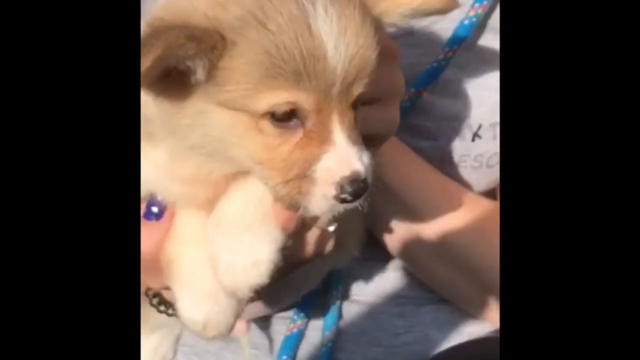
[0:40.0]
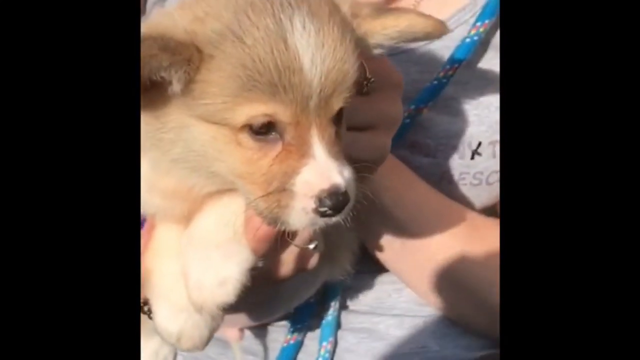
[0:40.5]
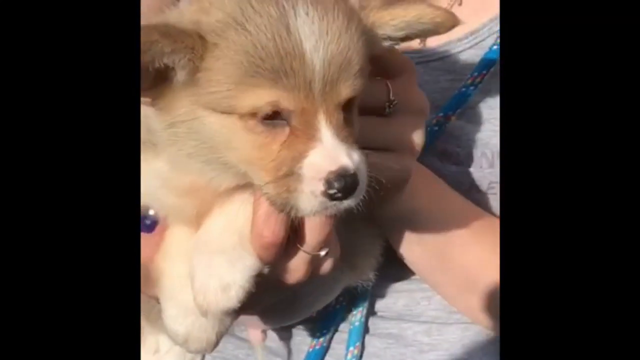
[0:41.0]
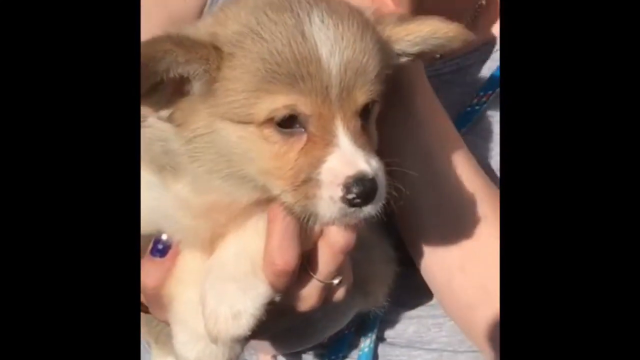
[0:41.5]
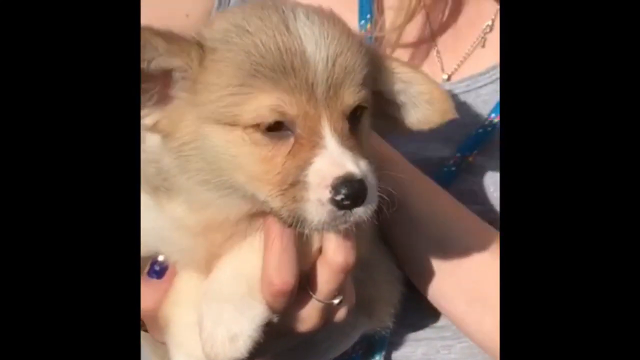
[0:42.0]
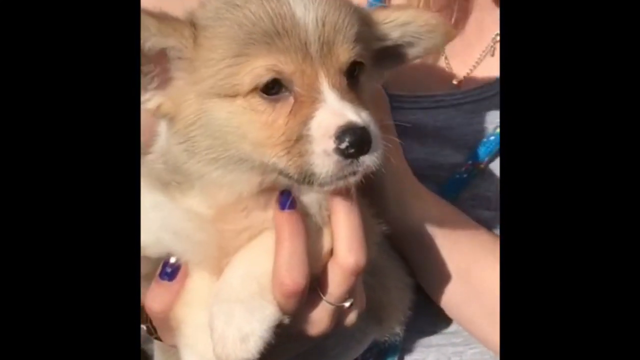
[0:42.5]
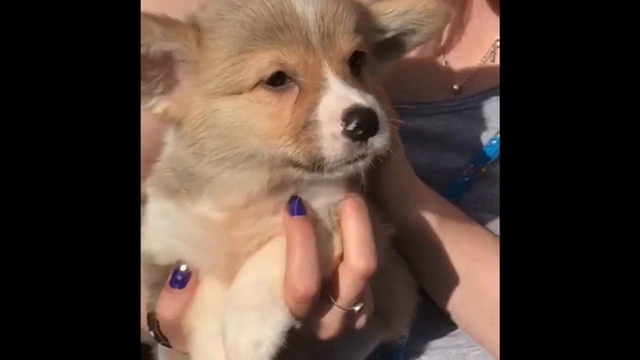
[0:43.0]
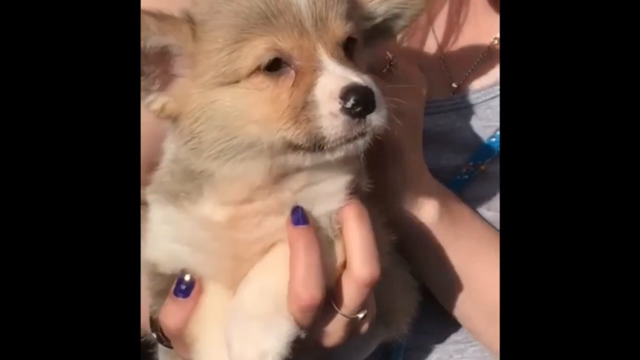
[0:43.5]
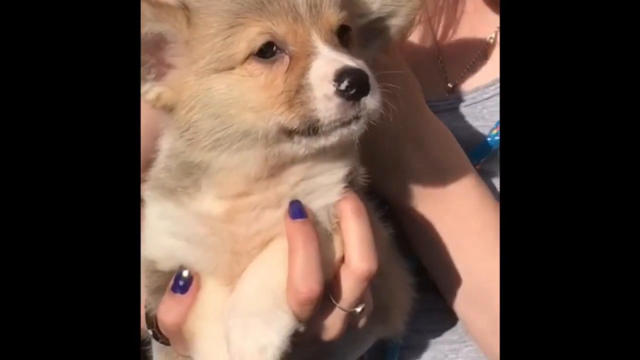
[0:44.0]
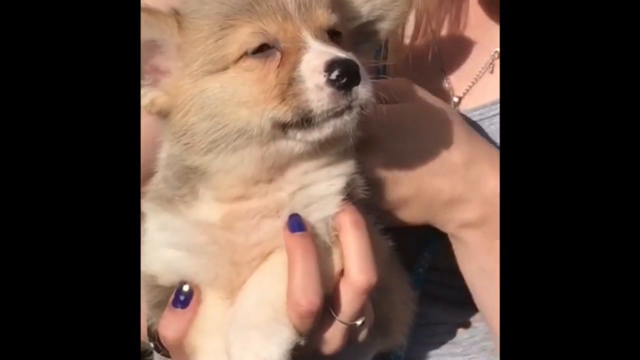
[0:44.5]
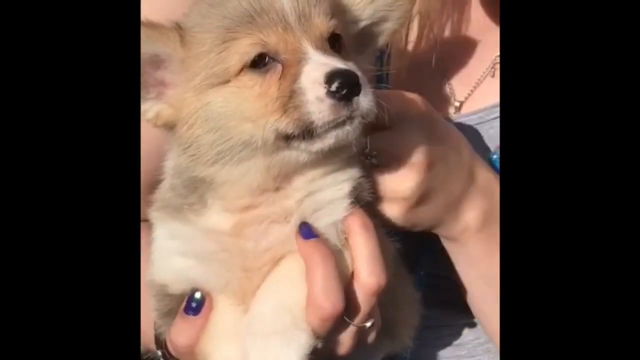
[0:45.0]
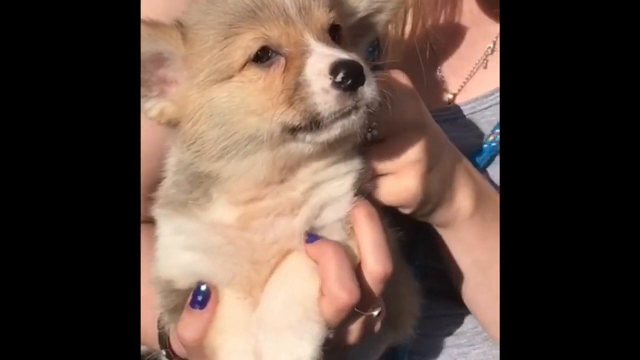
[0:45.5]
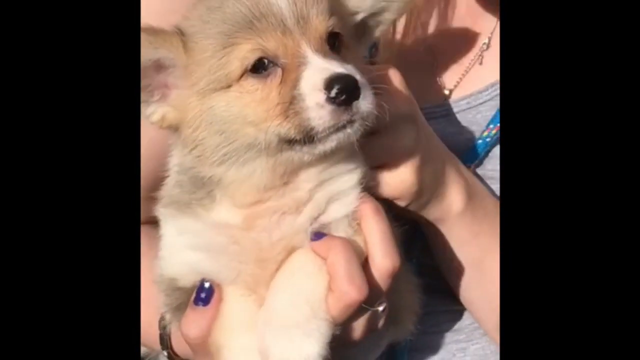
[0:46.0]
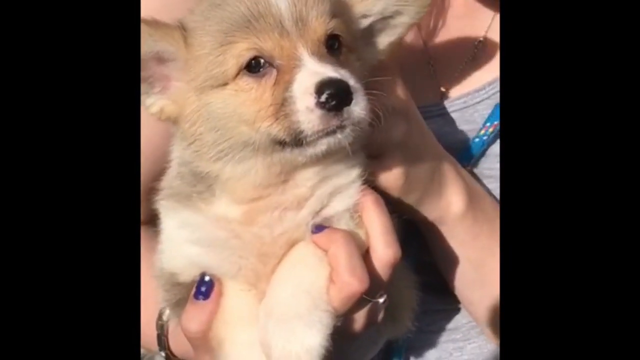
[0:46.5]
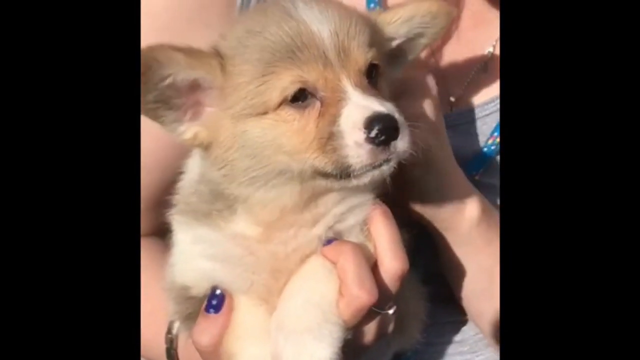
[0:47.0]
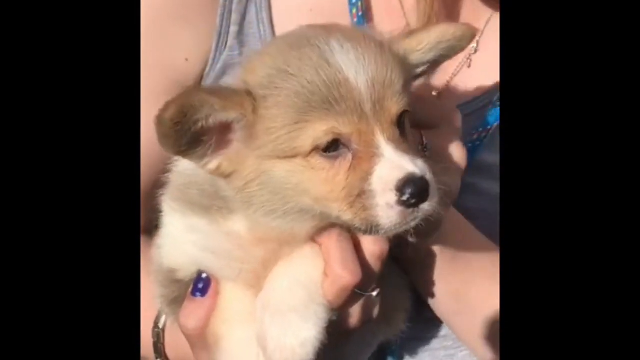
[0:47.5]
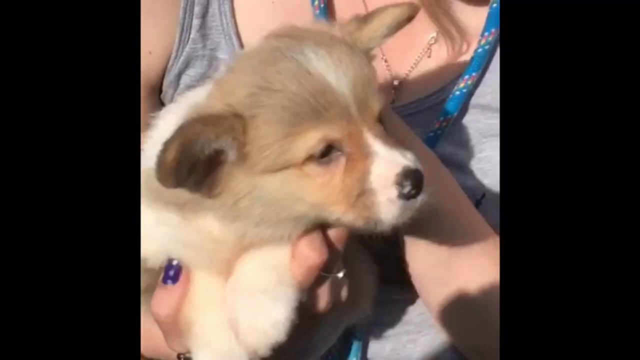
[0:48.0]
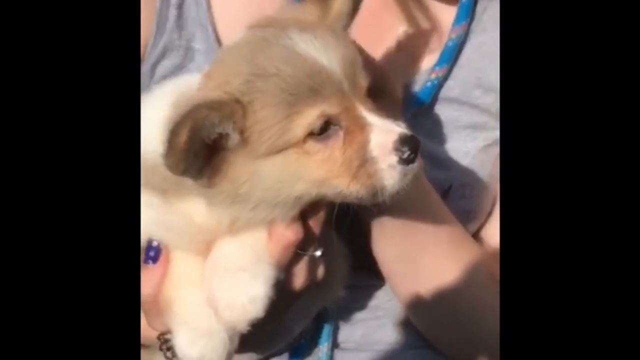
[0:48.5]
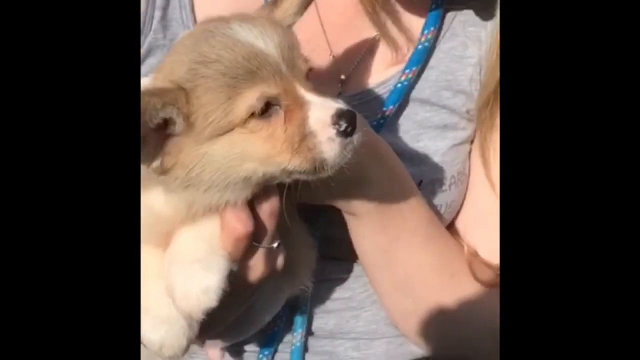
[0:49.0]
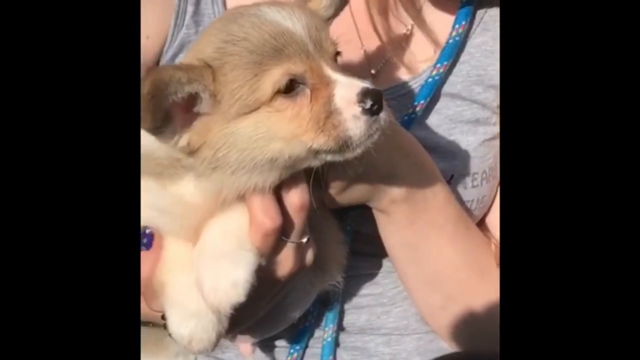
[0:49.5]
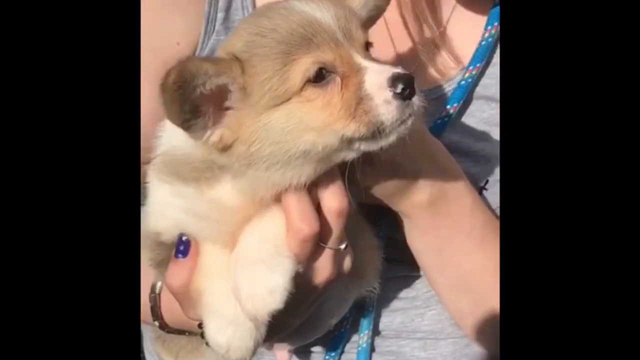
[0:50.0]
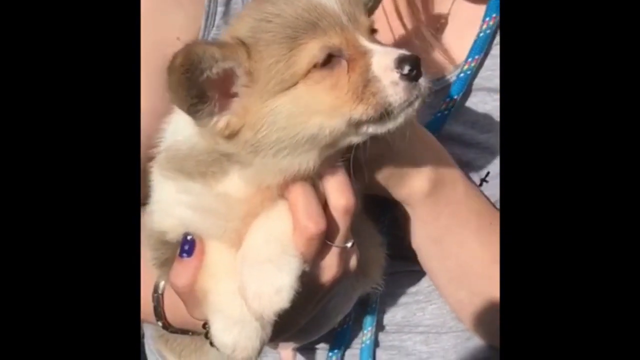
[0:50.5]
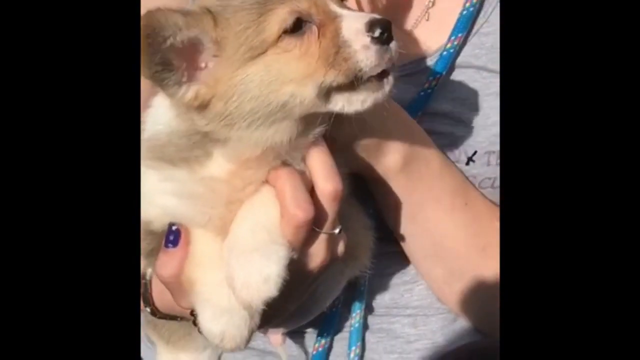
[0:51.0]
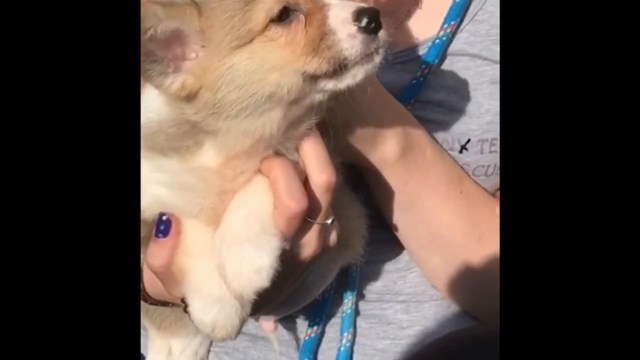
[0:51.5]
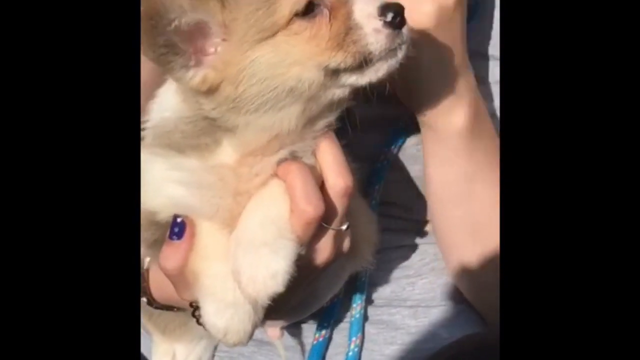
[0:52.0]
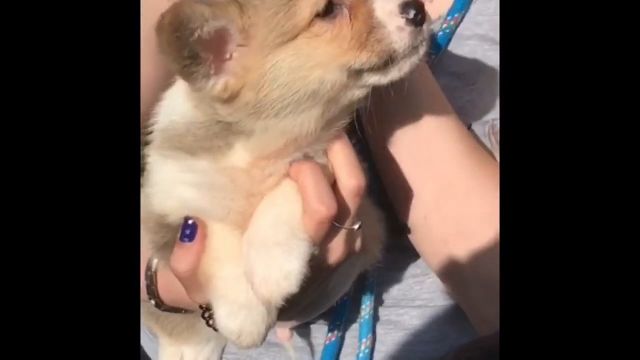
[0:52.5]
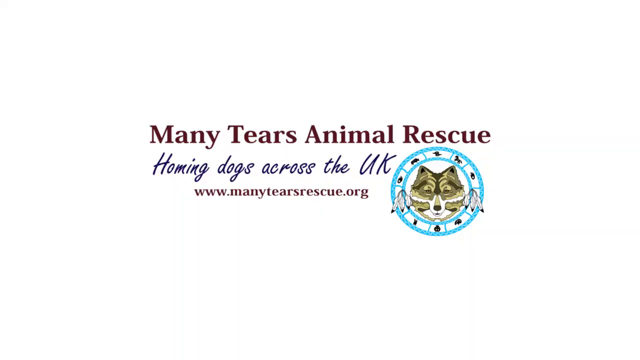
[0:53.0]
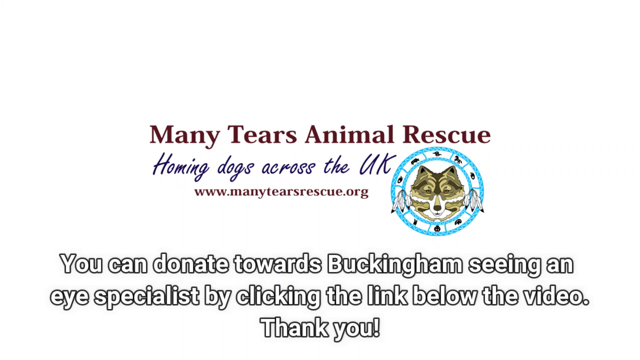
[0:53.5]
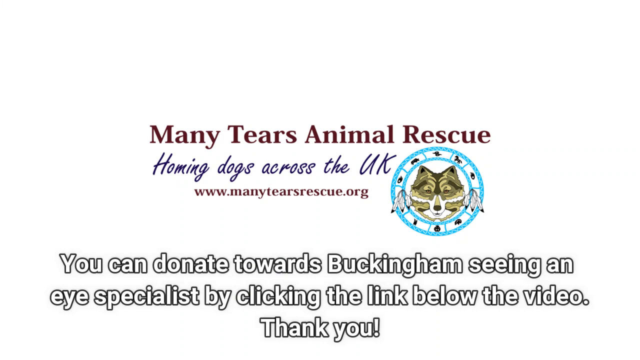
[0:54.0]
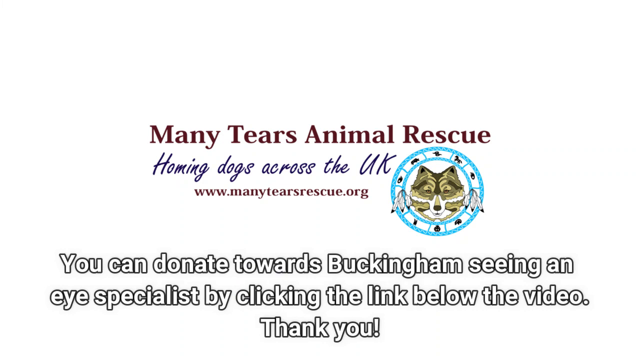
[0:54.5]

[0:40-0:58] The petting continues for a few more seconds, then the video changes to a screen reading "Many Tears Animal Rescue, homing dogs across the UK" with the website "www.manytearsrescue.org". The logo is two blue circles, a big one outside and a smaller one inside, with a dog inside. He says "you can donate to us" and "by clicking the link below. Thank you," so there is apparently a link below.